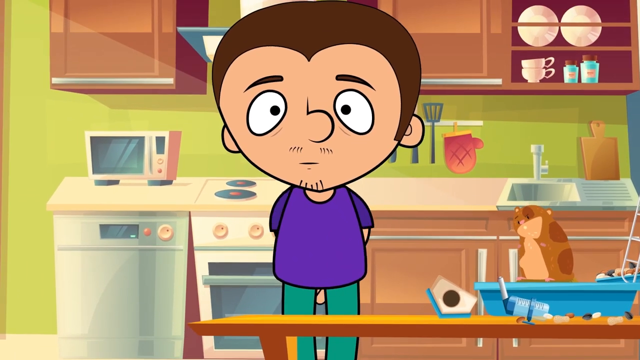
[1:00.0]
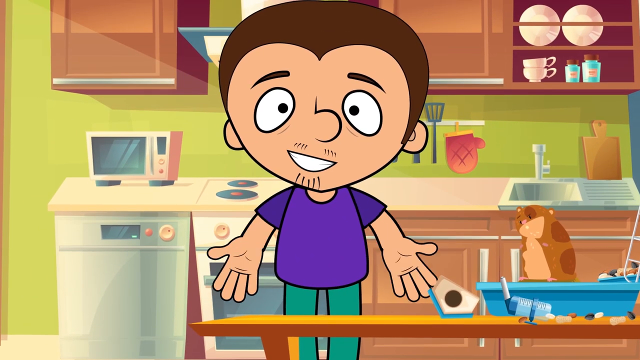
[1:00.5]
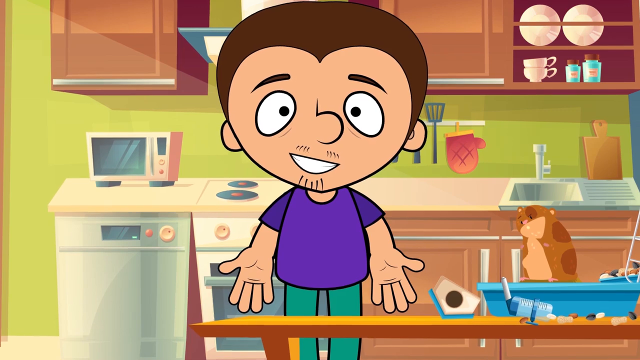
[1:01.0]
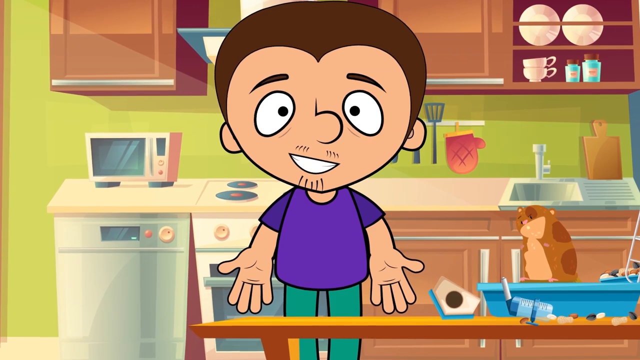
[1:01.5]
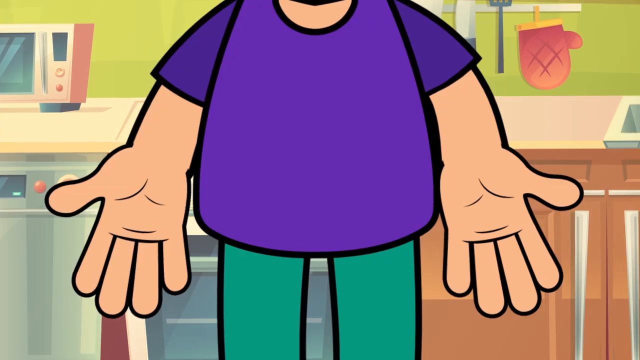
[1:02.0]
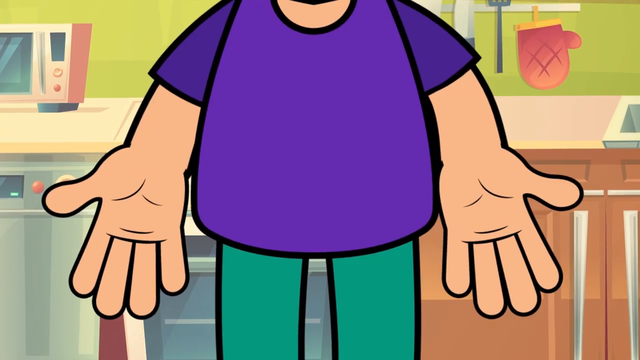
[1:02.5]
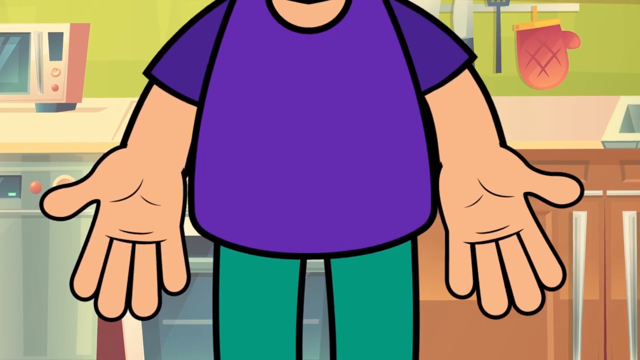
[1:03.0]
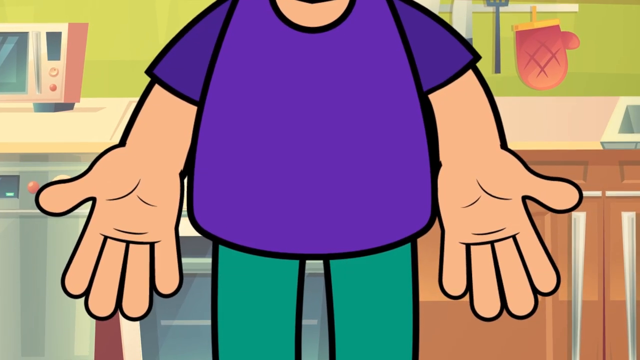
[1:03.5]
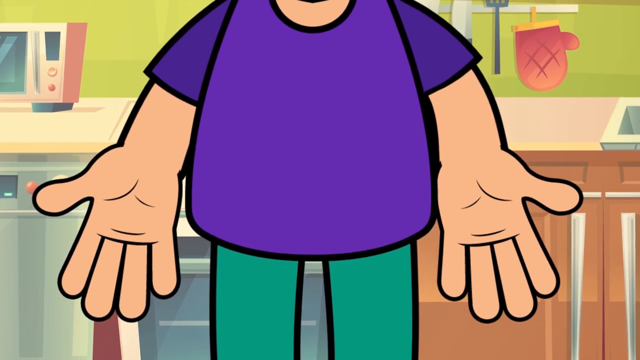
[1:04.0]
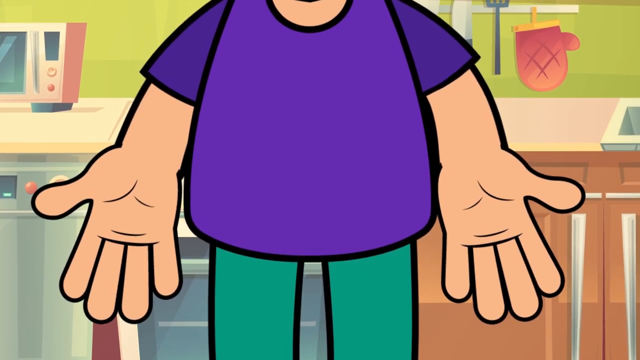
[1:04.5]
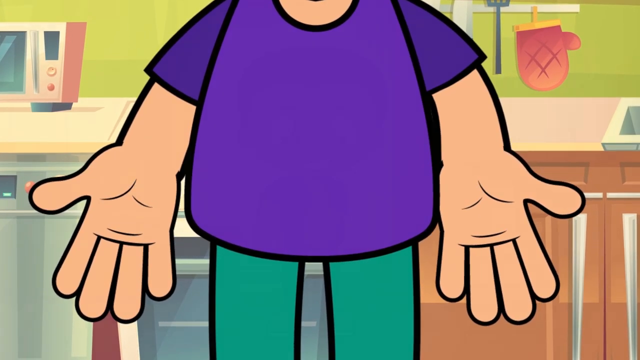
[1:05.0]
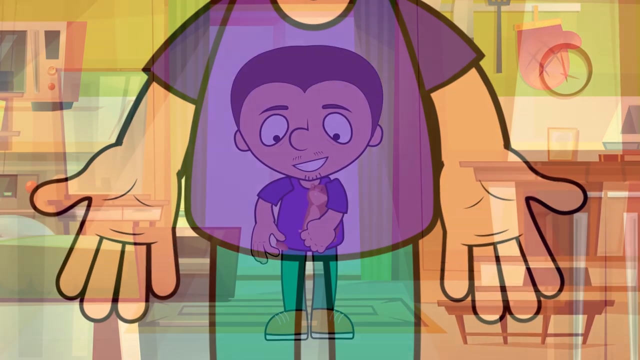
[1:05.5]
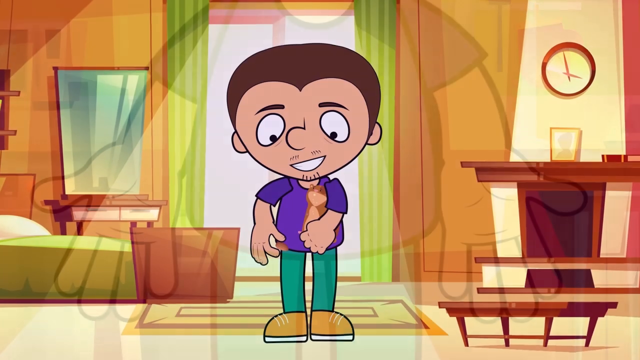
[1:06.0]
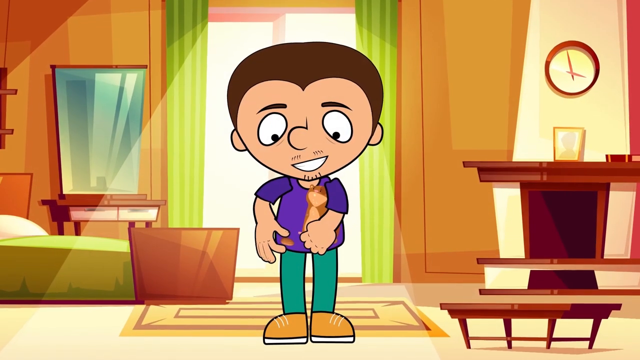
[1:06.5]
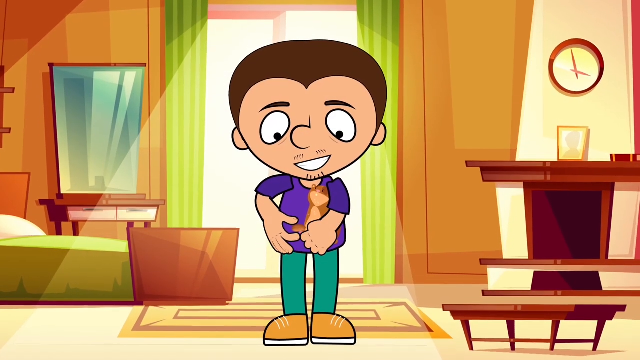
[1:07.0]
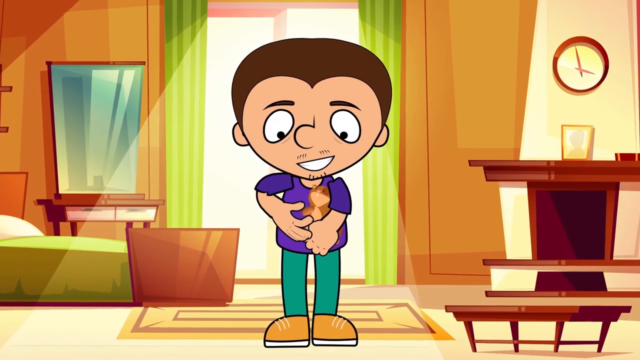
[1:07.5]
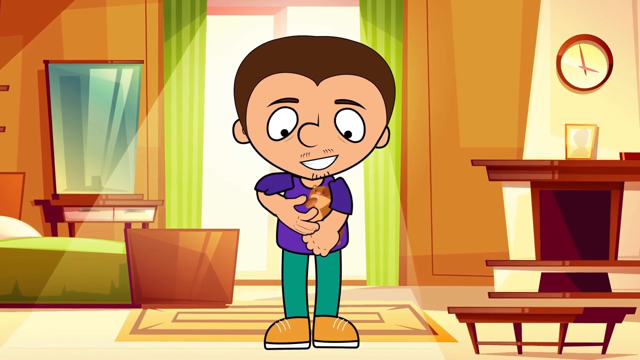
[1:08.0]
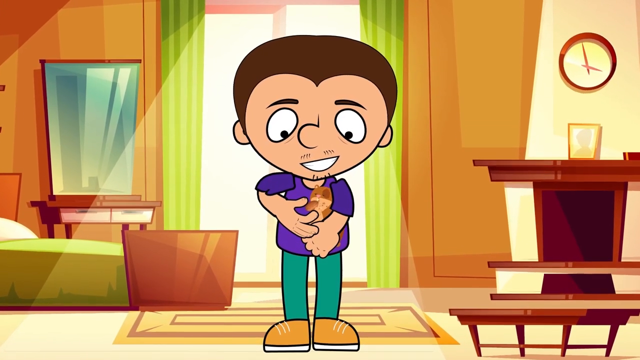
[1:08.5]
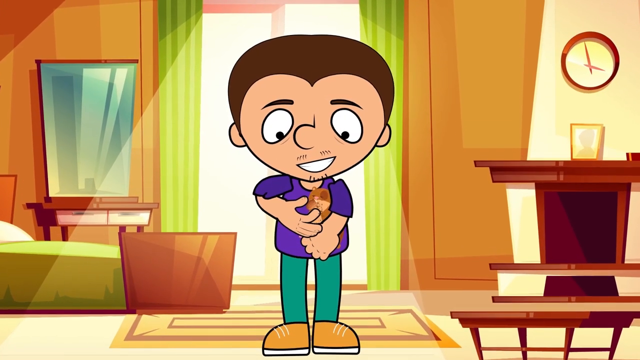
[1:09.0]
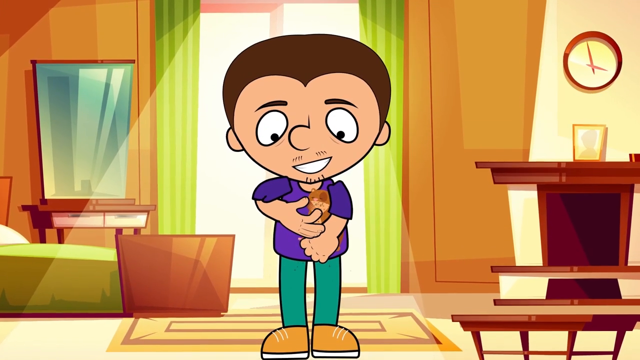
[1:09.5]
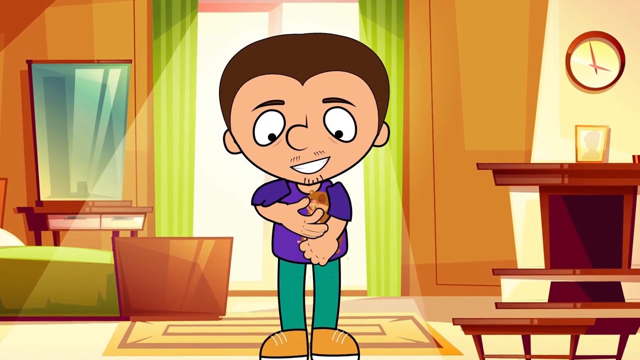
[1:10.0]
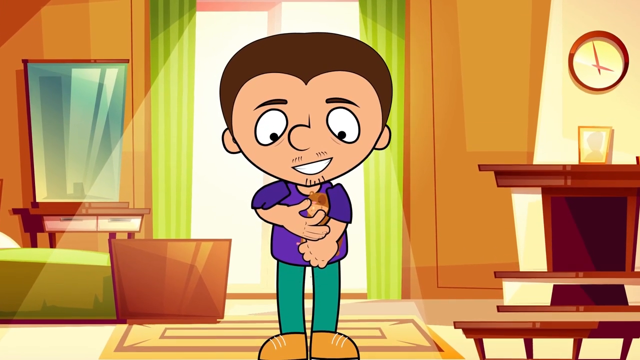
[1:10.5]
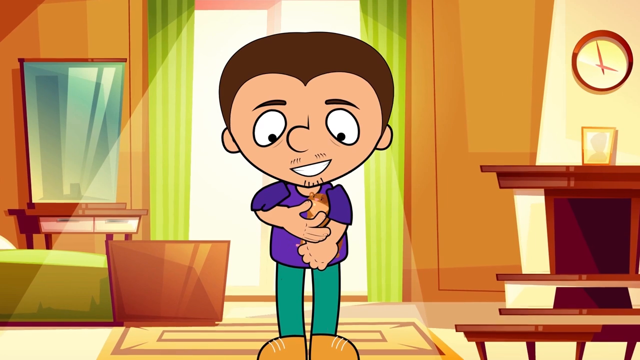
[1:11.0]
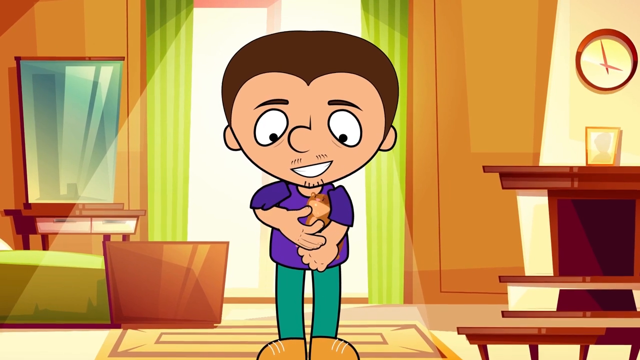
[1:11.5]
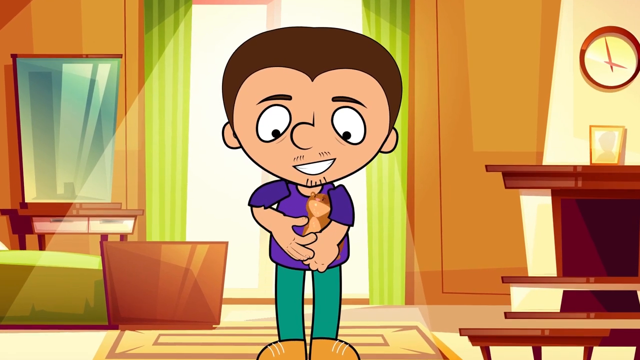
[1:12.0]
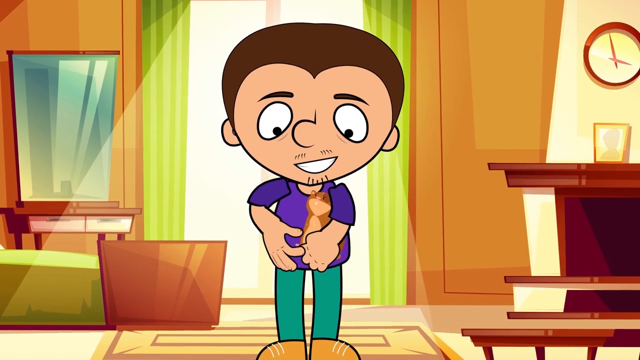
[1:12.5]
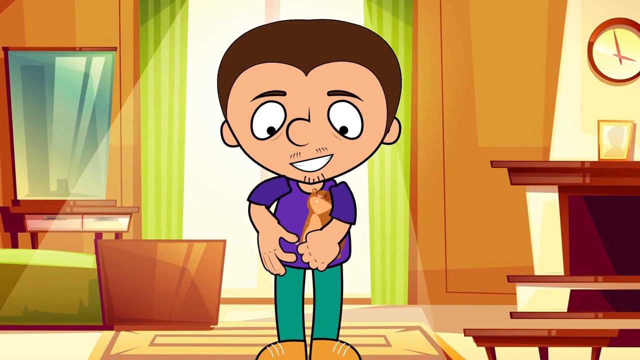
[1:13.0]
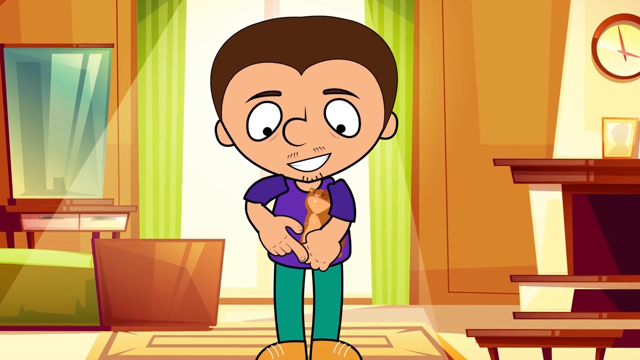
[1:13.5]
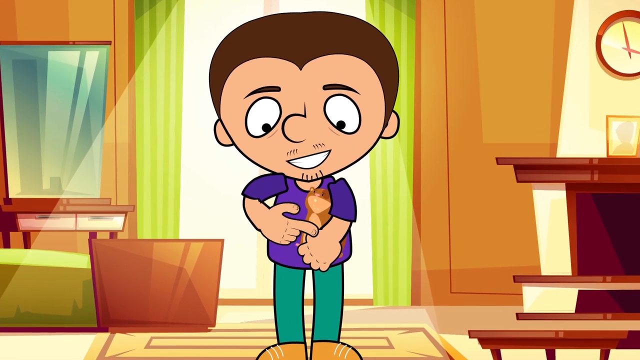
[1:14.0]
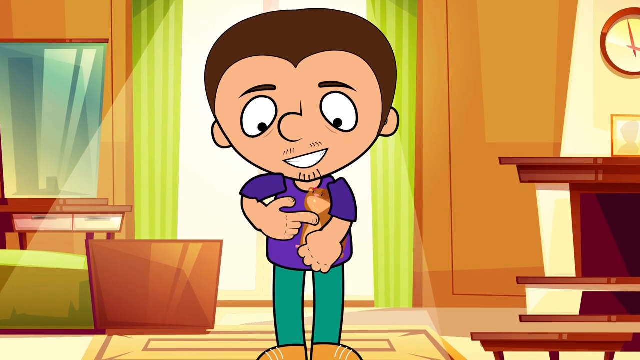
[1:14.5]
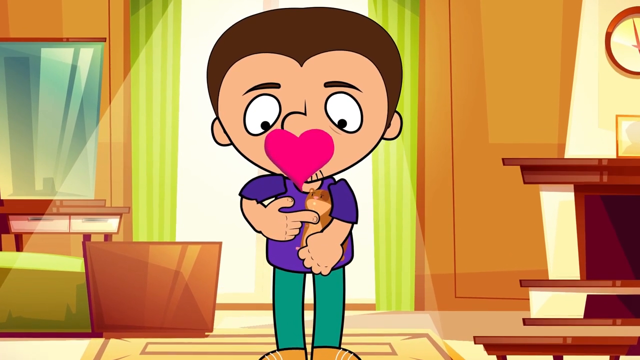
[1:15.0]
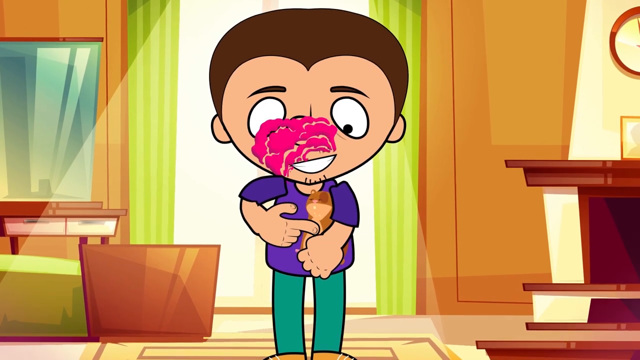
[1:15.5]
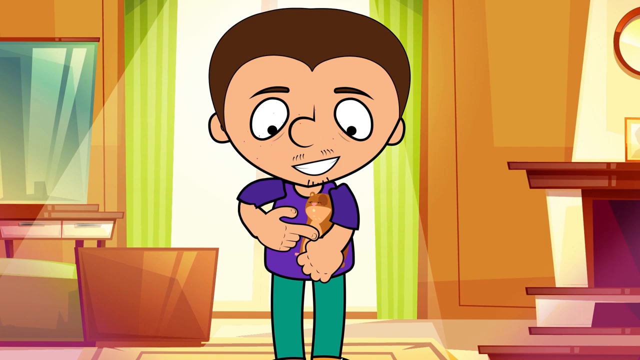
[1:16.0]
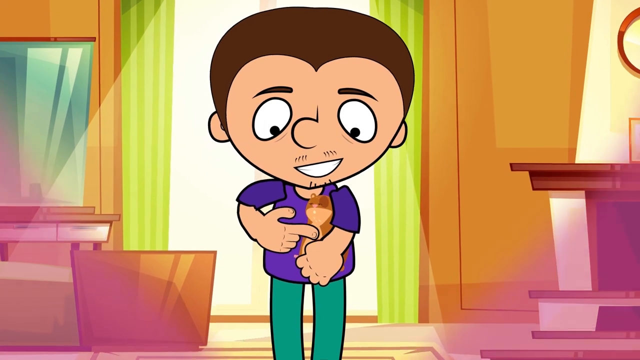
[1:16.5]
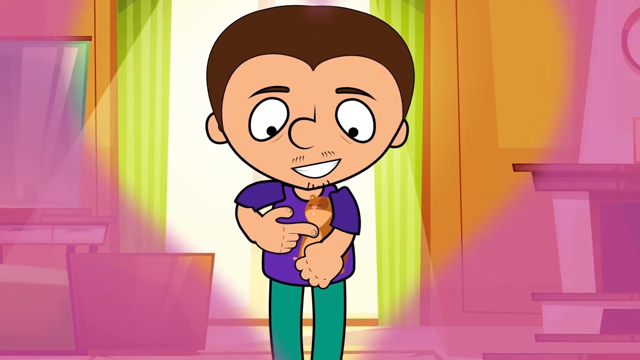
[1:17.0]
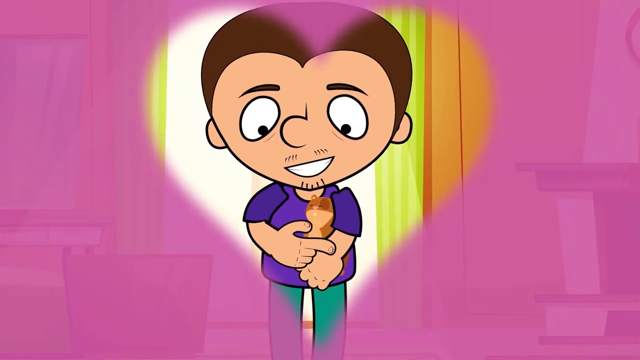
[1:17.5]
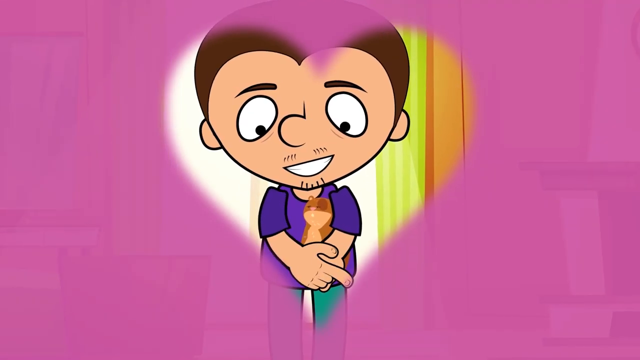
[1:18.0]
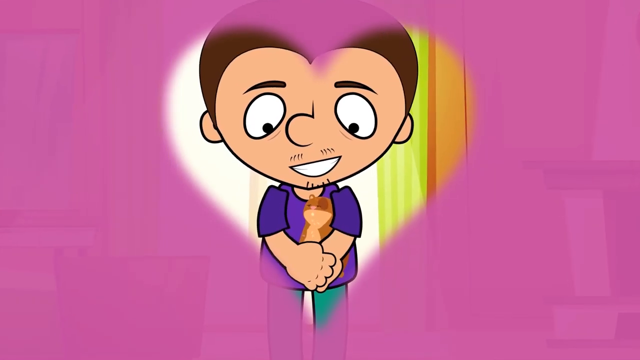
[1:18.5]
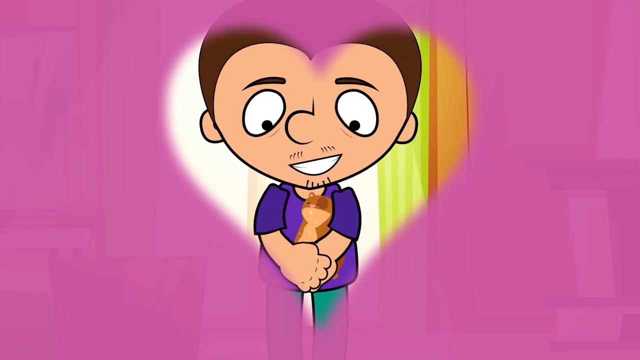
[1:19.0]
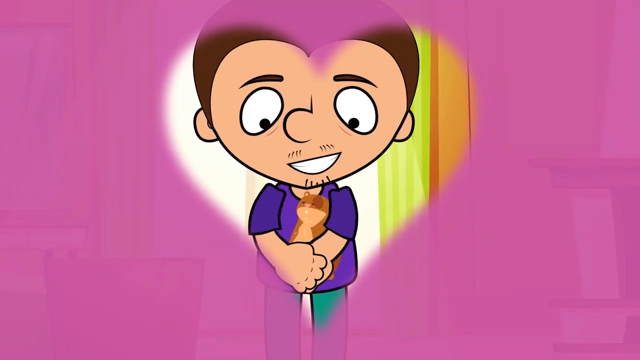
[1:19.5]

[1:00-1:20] The male character stands next to the hamster. He puts his hands out and begins to smile, palms facing upward and out toward the camera; they sparkle, appearing nice and clean. The man is then standing in a bedroom in front of an open window, holding the hamster and feeding him what appears to be a small brown nut. The hamster eats it and appears to glance up at his owner. The man strokes the hamster lightly with his right index finger from bottom to top, rubbing near its neck, and the hamster clearly enjoys the attention. A love heart appears from the hamster, and the scene ends with a heart-shaped vignette.